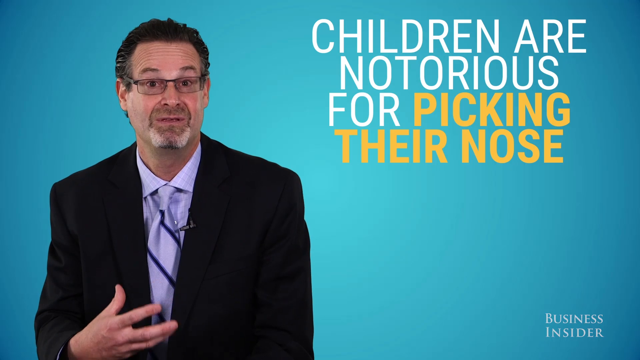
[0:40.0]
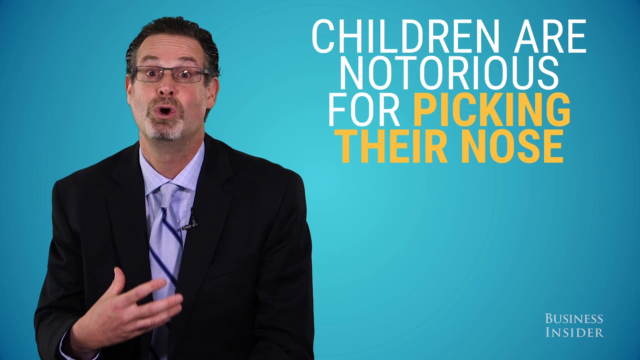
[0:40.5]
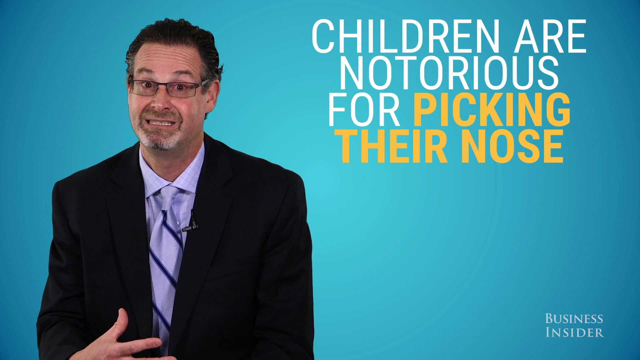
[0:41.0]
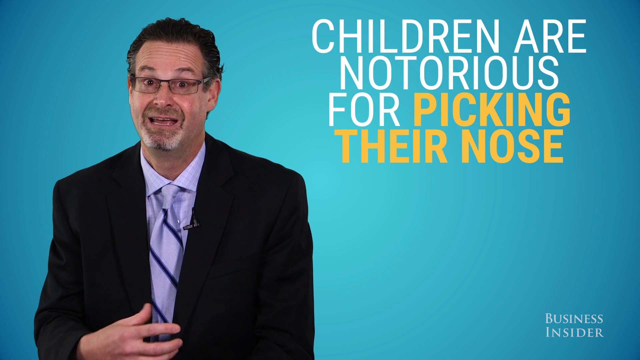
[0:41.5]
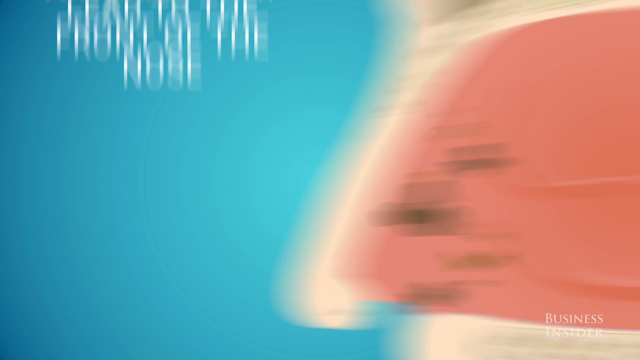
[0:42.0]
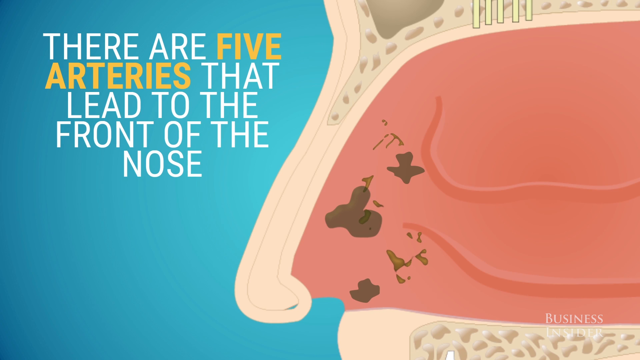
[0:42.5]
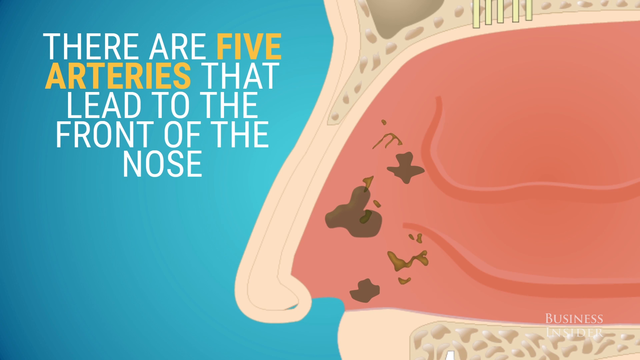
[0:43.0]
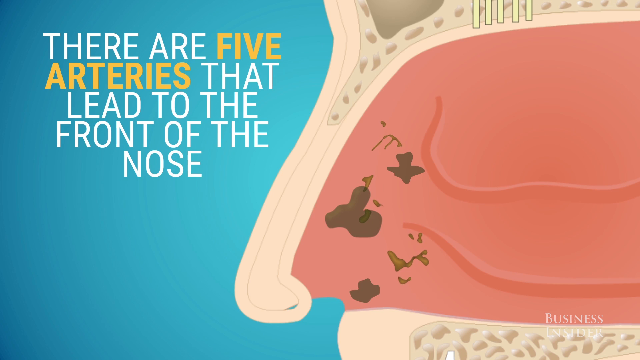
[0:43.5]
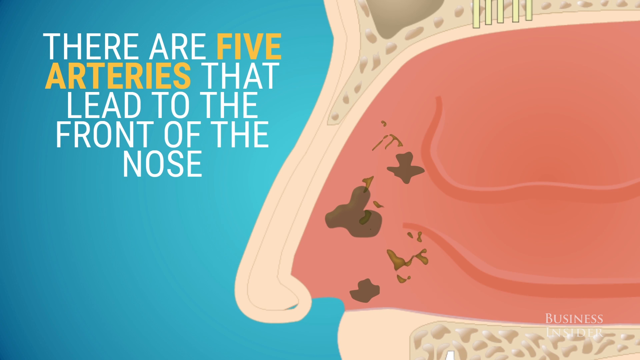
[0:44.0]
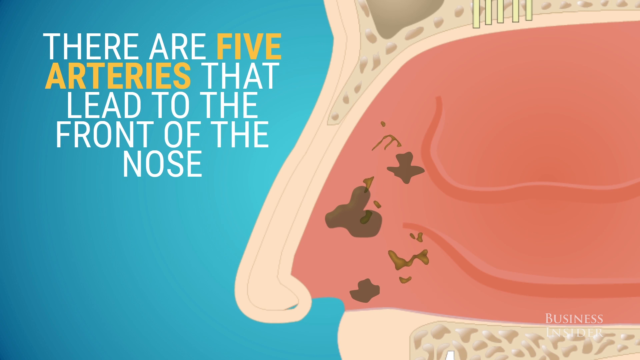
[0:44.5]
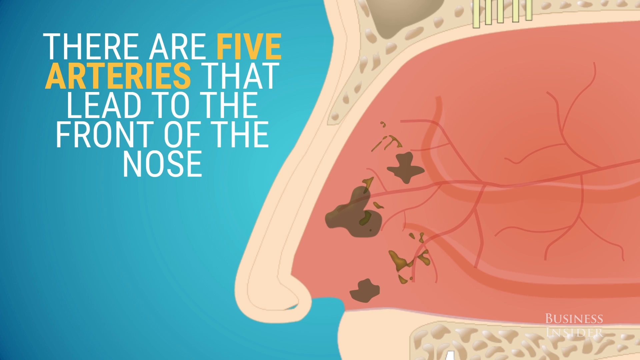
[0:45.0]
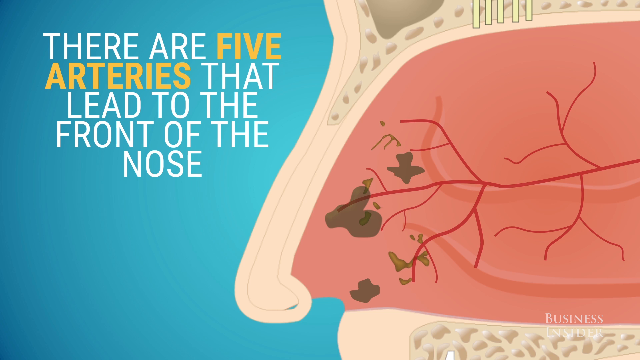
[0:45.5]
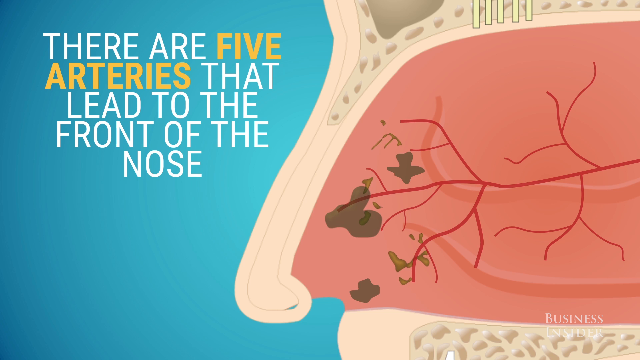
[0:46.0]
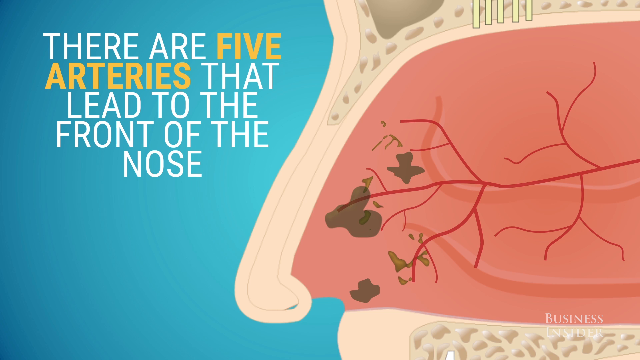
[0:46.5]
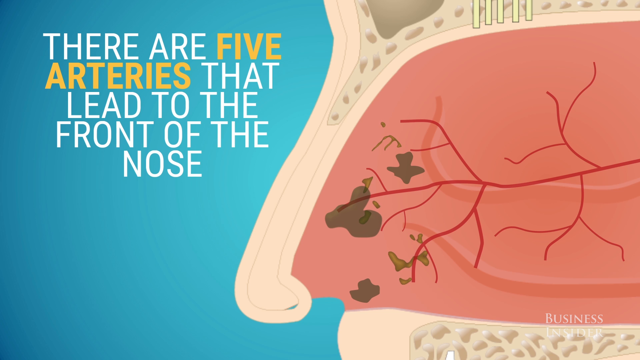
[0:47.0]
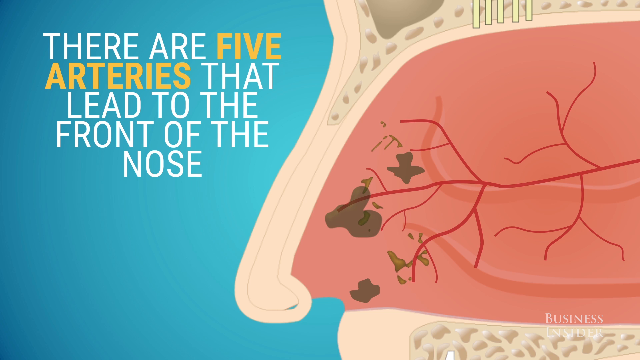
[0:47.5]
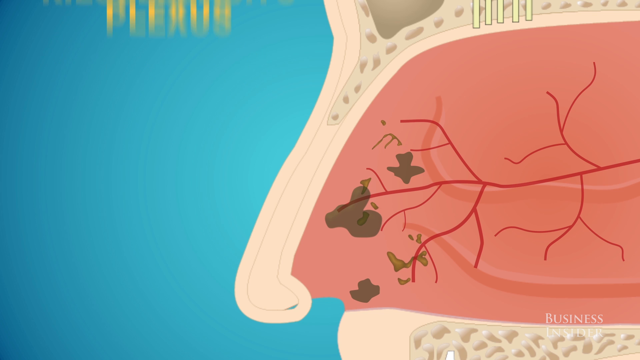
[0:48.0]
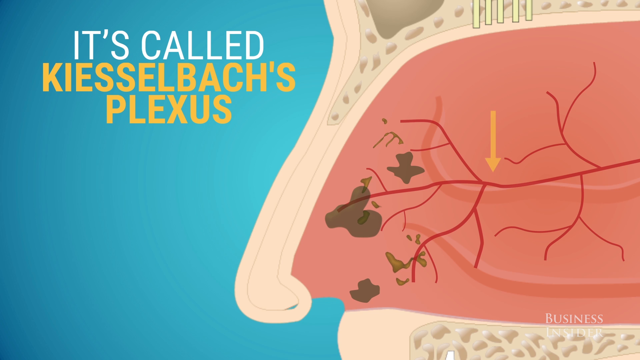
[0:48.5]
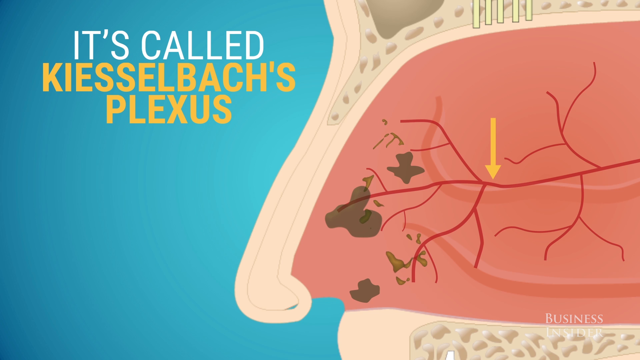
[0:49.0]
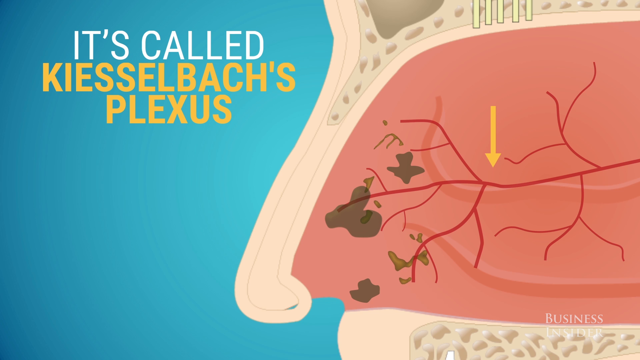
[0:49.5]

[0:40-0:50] The man is on the left with text on the right. He talks very dramatically and looks very worried, using hand gestures, with an odd expression on his face. The text on the right reads "children are notorious for picking their nose," with "picking their nose" in yellow and the rest in white, and a Business Insider logo is in the bottom right. The video then returns to the diagram of the human and their nose, this time fairly zoomed in. Text reads "there are five arteries that lead to the front of the nose," with "five arteries" in yellow. The brown germs appear on the nose part of the diagram. Red veins come in from the right and branch up into the nose area; the human faces left, so the veins come from the inner part of the body.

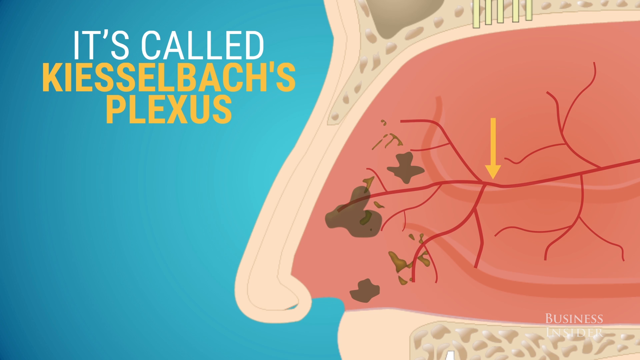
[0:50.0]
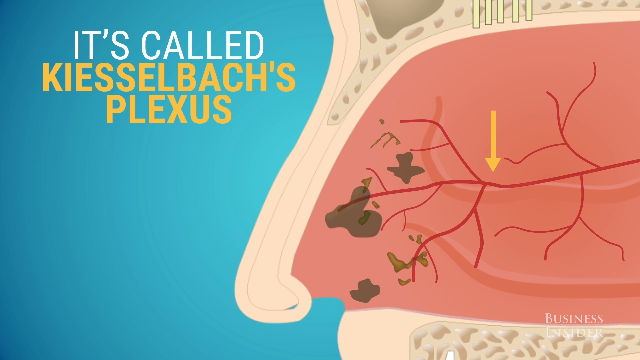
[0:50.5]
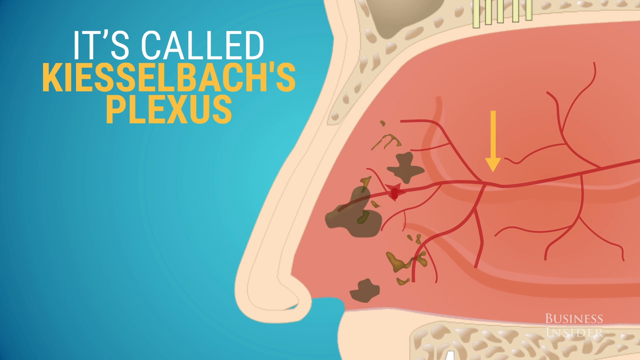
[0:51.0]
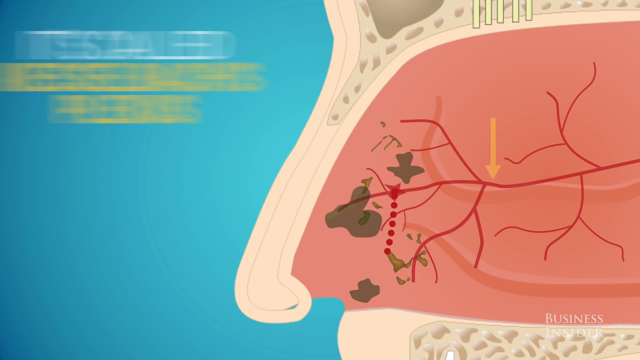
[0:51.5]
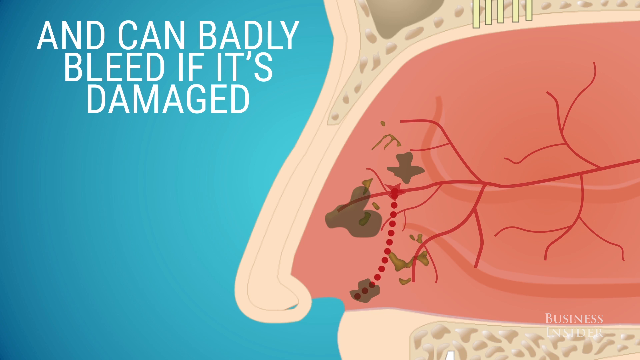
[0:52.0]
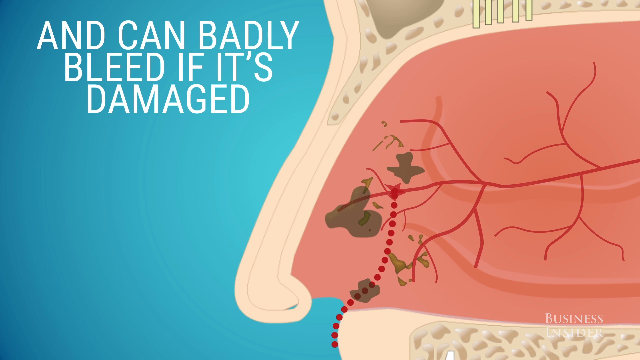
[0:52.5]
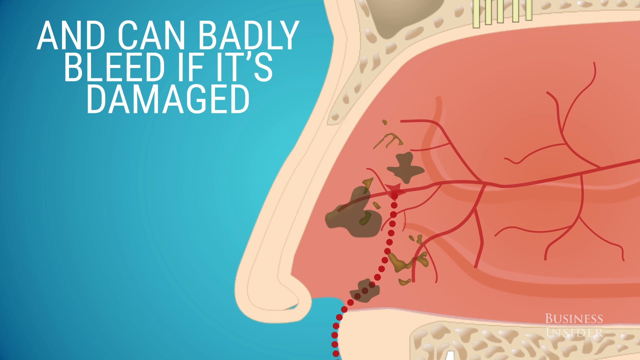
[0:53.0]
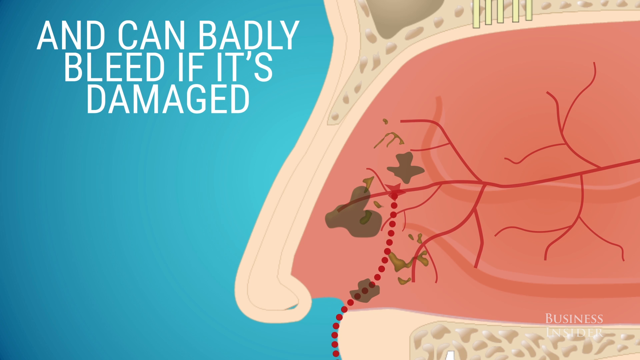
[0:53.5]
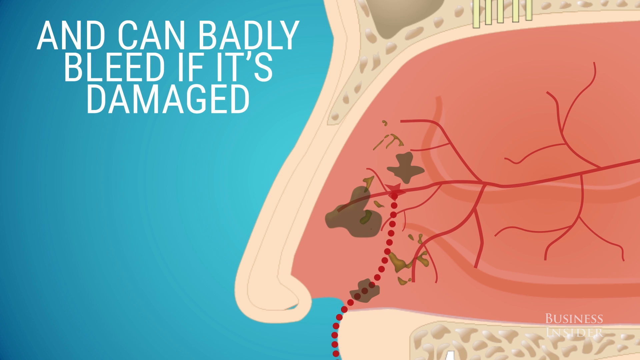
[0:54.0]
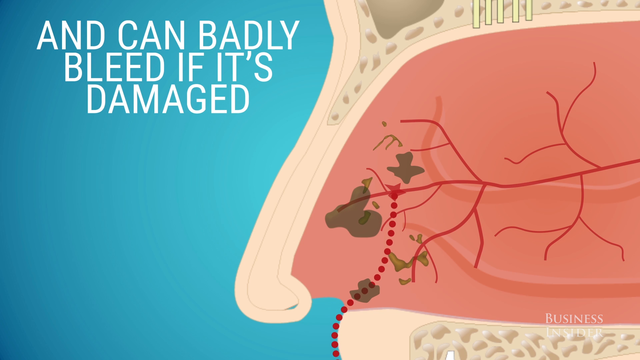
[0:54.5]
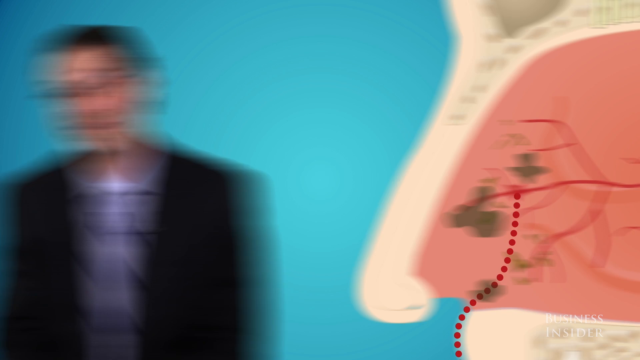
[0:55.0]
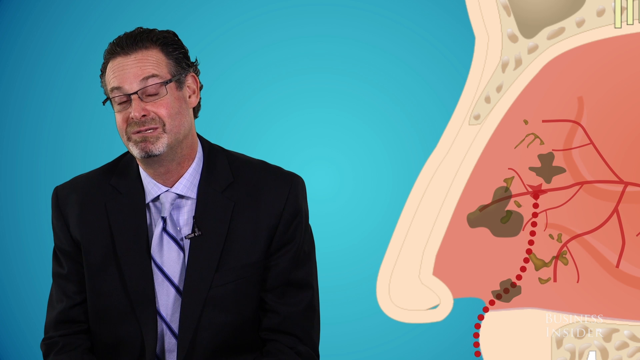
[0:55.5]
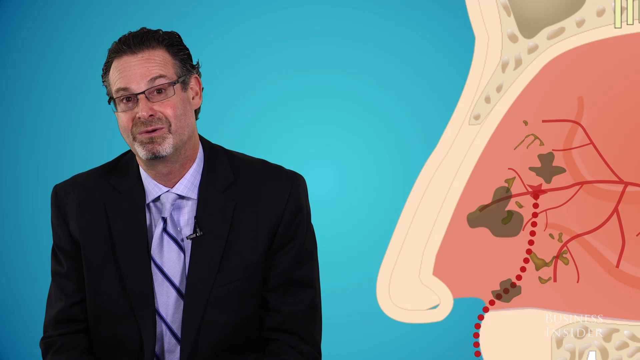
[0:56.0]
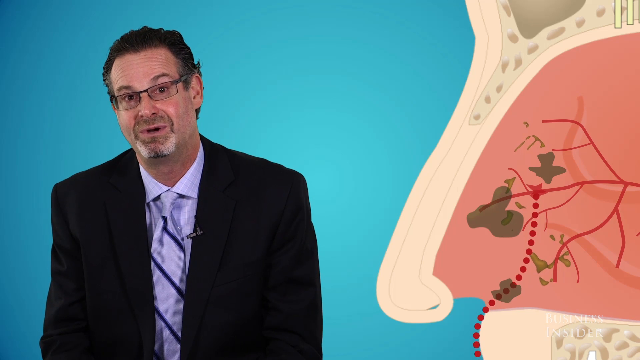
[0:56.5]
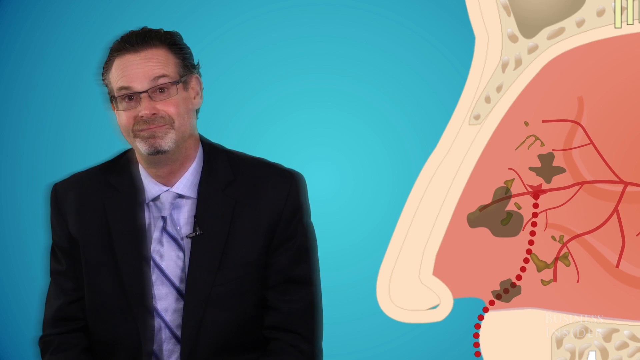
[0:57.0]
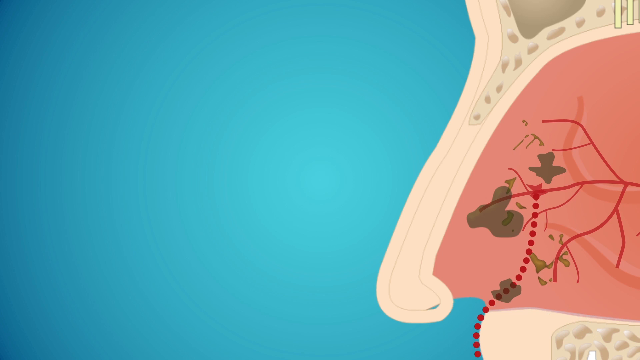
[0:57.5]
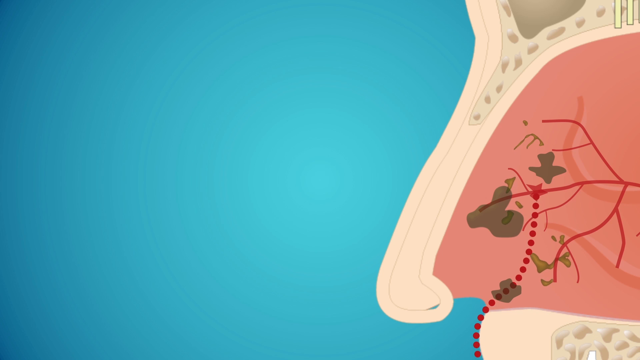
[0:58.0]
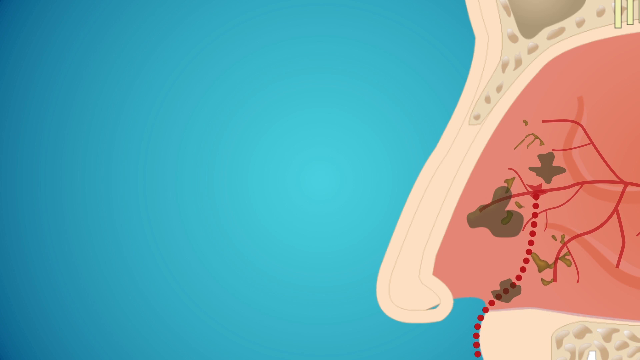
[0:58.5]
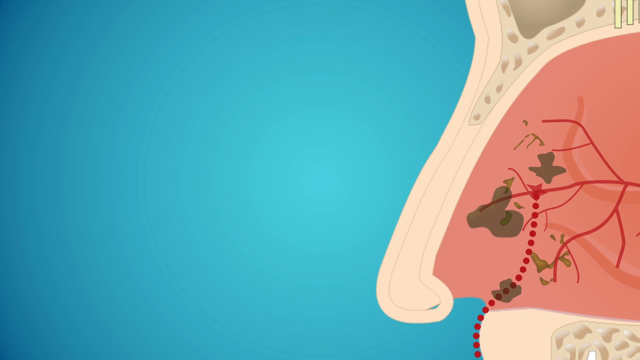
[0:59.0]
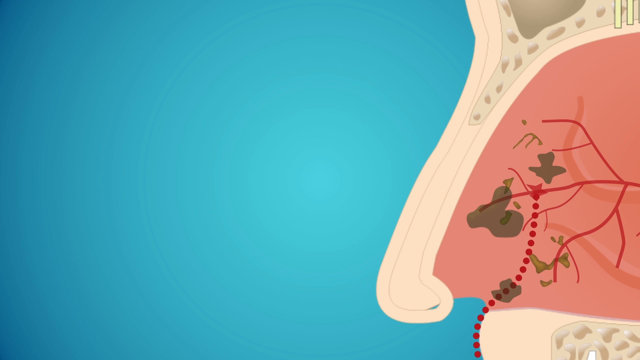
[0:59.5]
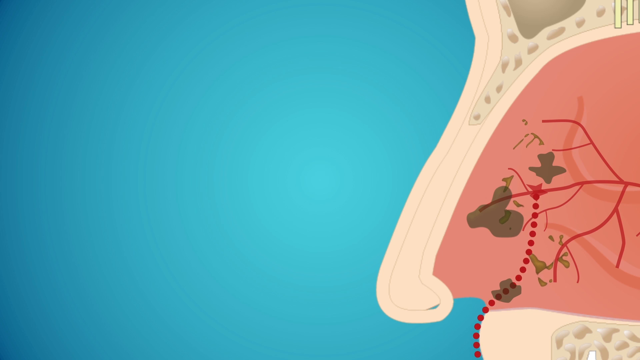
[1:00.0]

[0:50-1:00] The diagram of the human shows the veins pointing from the left, running from right to left, with a small arrow pointing to the central part of the veins and text naming it "chiasobox plexus." A small line of red dots runs from the front part of the vein down outside the nose, and text reads "...badly if it's damaged." The interviewer returns, looking somewhat pleased with himself. There appears to be a zooming animation in which he zooms back out to the left, while the line of red dots from the nose keeps going.